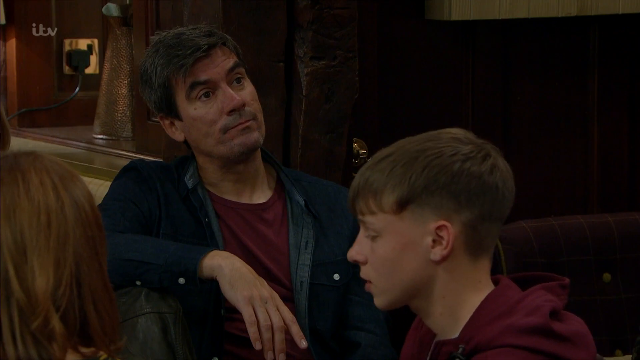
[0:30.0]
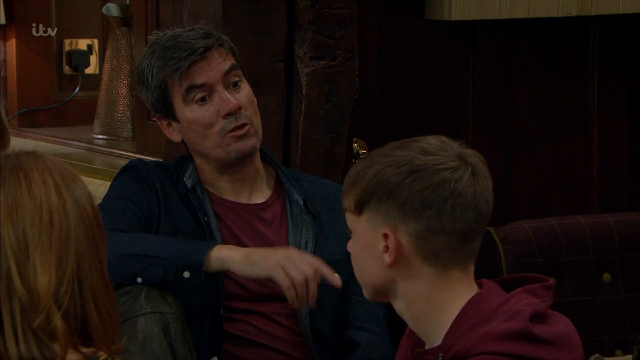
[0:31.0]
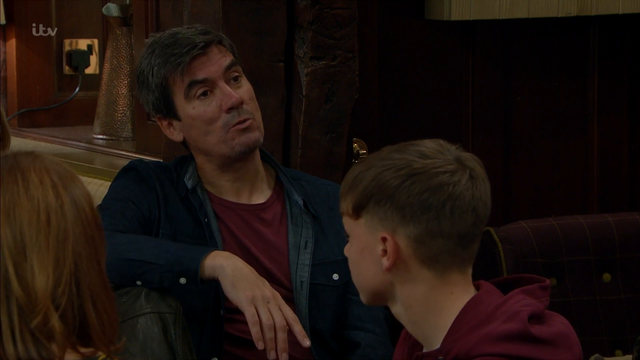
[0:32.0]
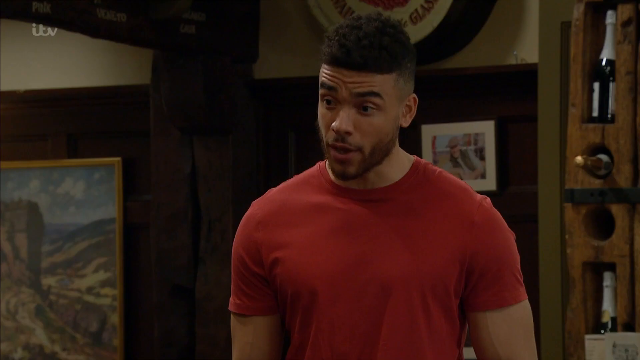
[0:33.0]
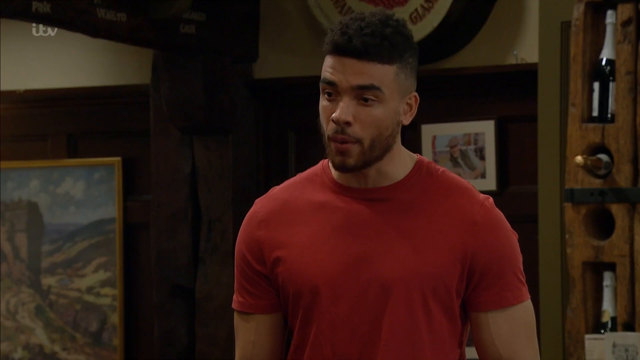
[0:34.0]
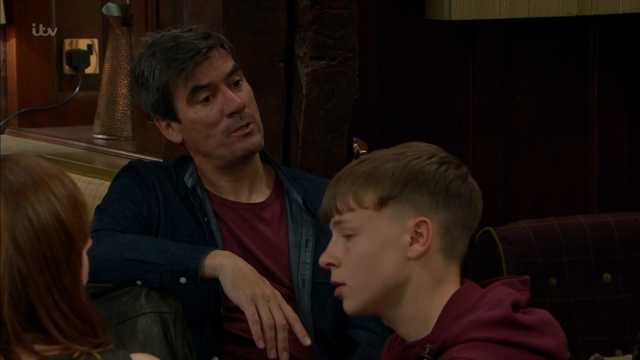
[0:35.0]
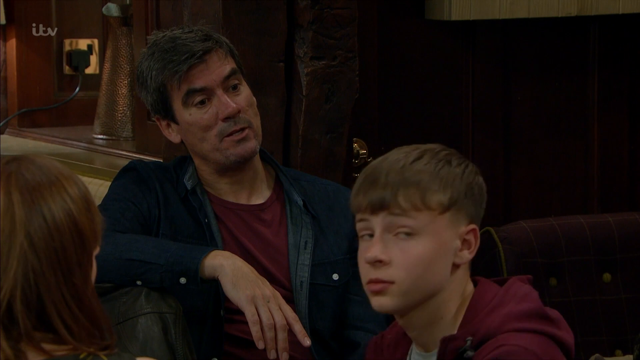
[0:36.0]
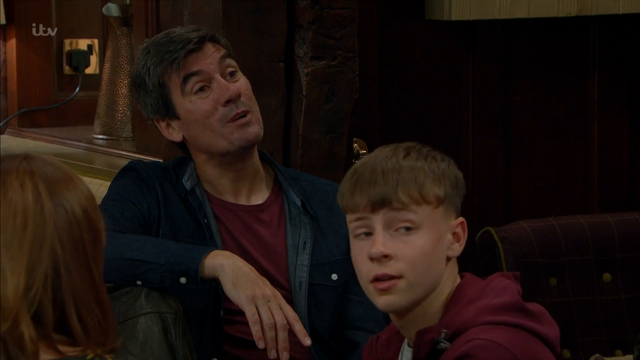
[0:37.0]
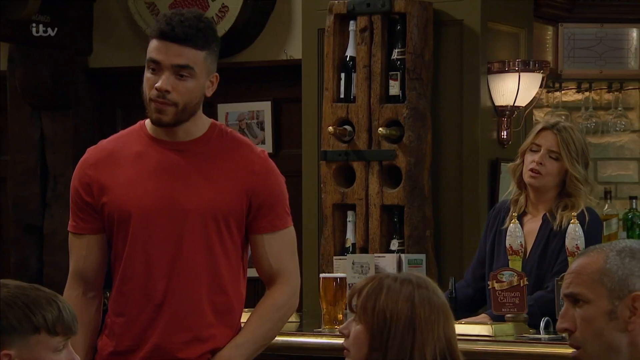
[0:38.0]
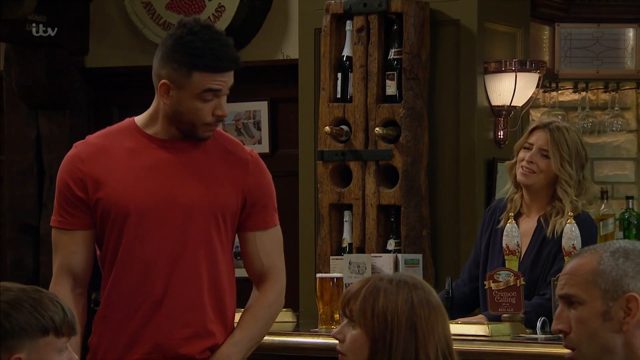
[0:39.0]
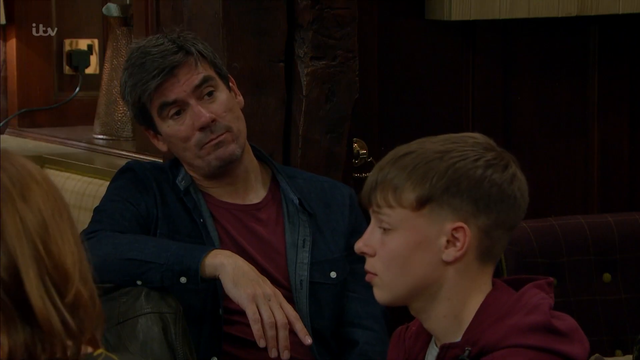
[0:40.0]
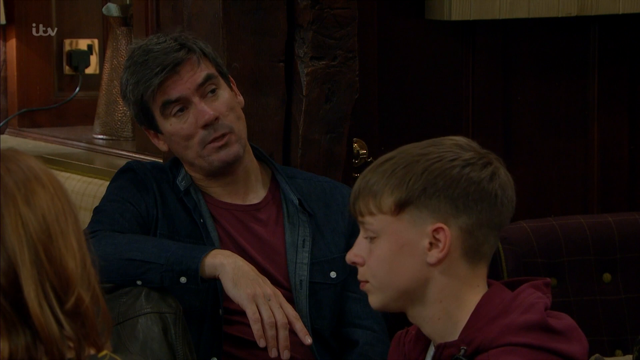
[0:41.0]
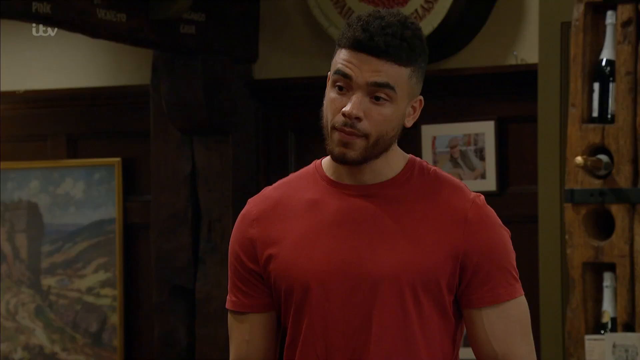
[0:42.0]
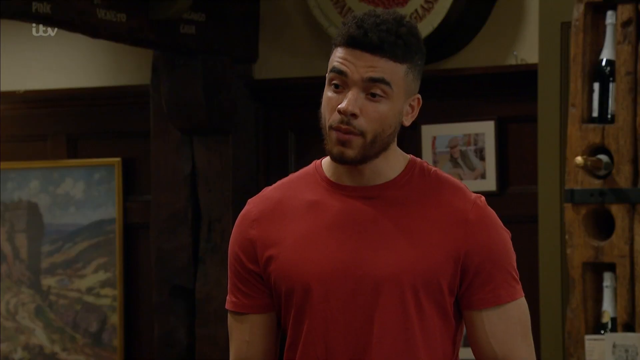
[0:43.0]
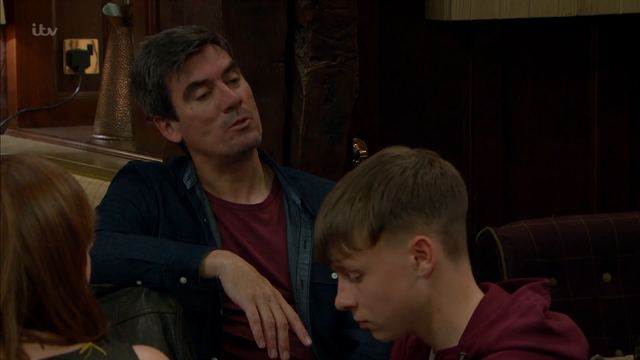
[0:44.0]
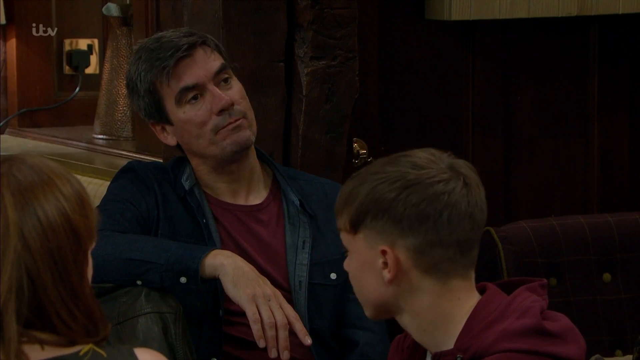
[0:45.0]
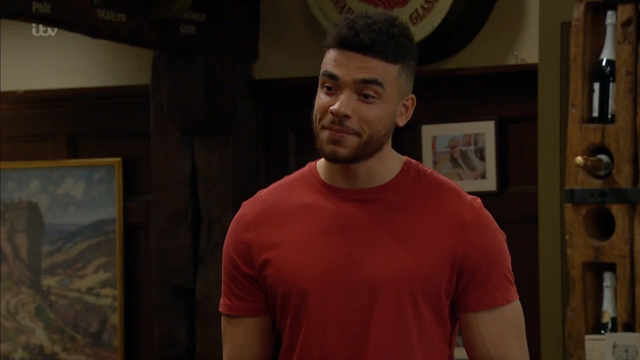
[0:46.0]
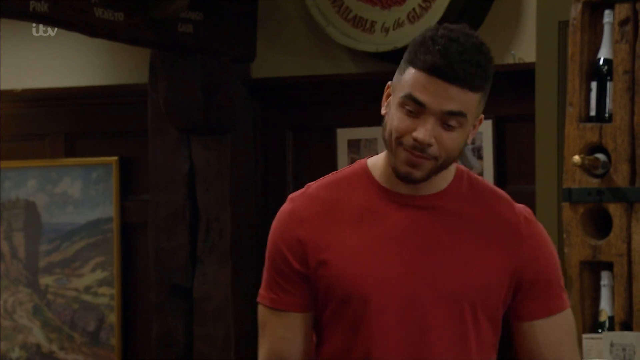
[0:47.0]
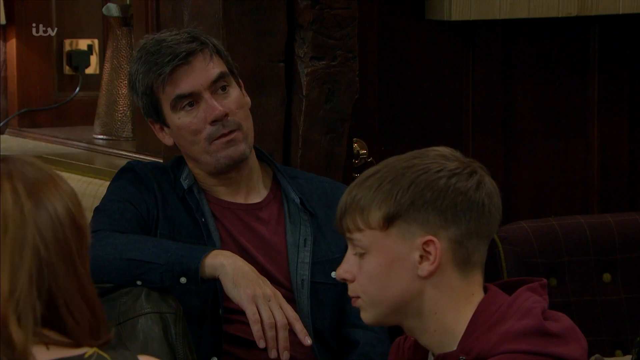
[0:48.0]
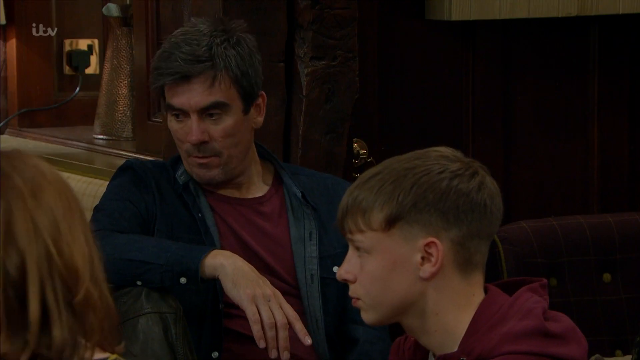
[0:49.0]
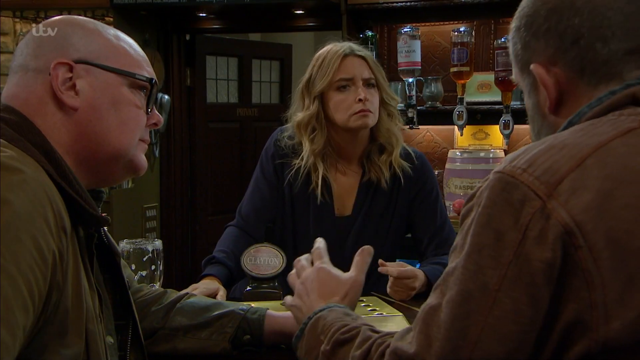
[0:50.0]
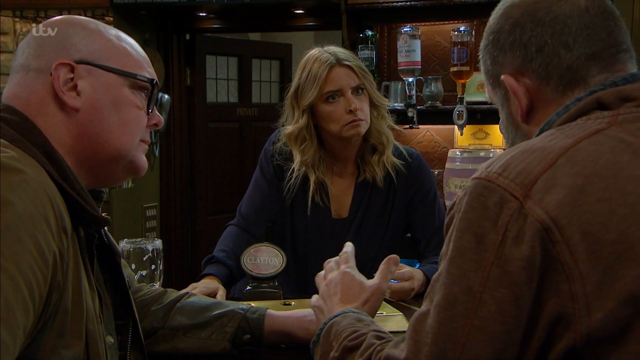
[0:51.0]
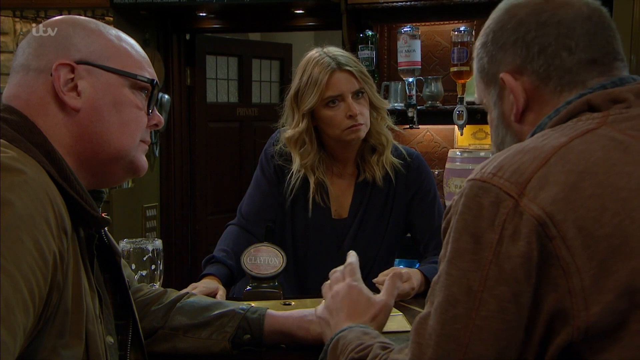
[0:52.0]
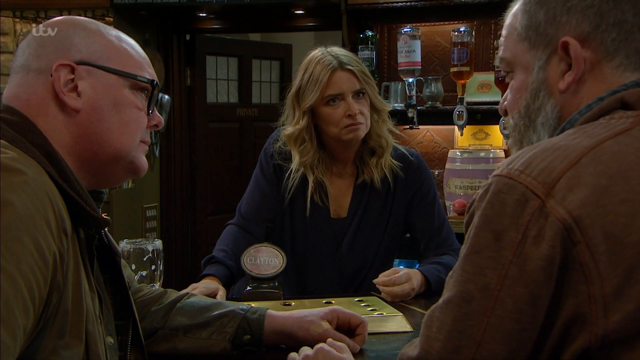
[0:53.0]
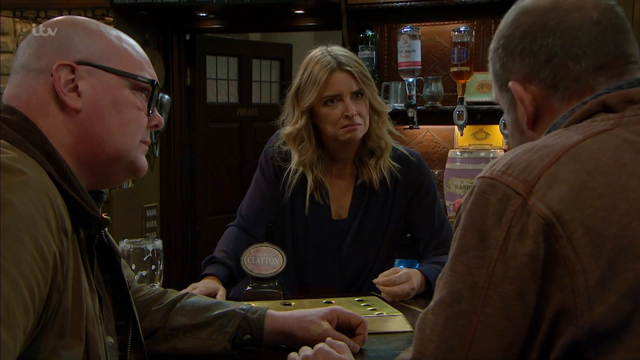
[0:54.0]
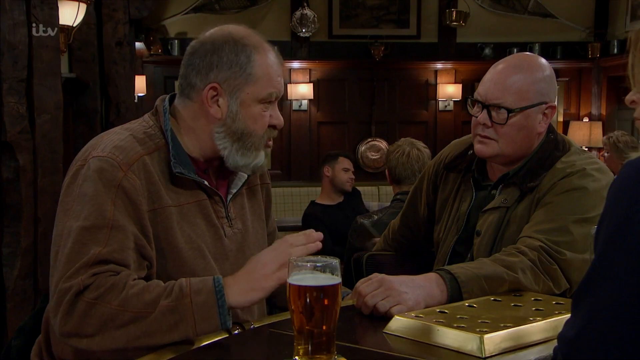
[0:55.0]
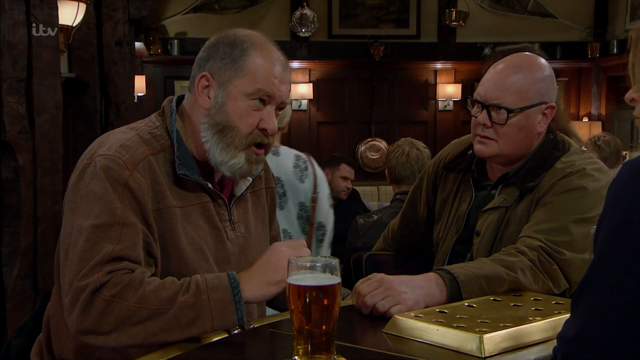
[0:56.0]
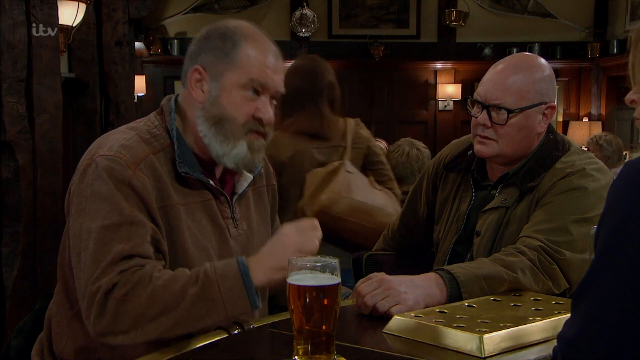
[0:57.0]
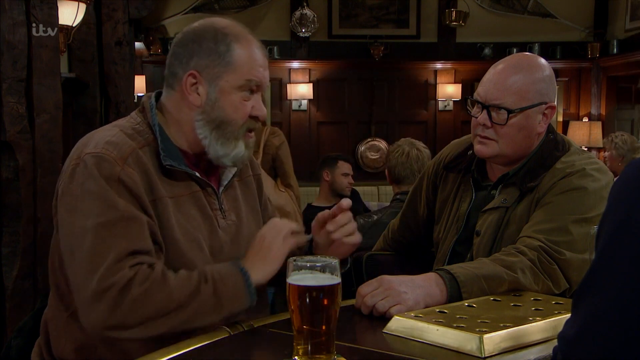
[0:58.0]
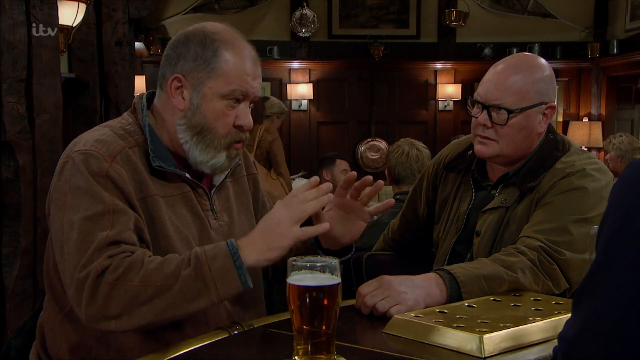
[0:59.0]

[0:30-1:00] The man in the blue button-down shirt and red undershirt lays his right forearm against the chair next to him. He raises his palm in the air and points his index finger out as he speaks, his head tilted up. A man in a red t-shirt with short hair looks down as he responds to the question, and the man in the blue shirt and red undershirt tilts his head up to answer. The camera changes to show a woman in a blue shirt behind the bar responding to what the man in the blue button-down shirt said. The camera changes back to the man, still leaning against the chair with his right forearm. He lifts his head to talk to the man in the red t-shirt, who raises his eyebrows, wrinkles showing in his forehead as he answers a question. With a slight smirk on his face, the man in the red t-shirt turns back toward the bar. The seated man in the blue button-down shirt turns his head toward his right shoulder and looks down. The camera shows a close-up of two customers sitting at the bar. The man on the left side of the screen has a bald head and black-framed glasses. The man on the right side wears a light brown leather jacket and raises his left hand off the bar as he speaks to the bartender in front of him, who has a blue shirt and long blonde hair. She gives a slight frown as he finishes talking. The scene then shows the man in the brown leather jacket from the front. He has a large gray beard and moves his right hand up and down as he exclaims and makes a point, then raises both hands in the air with his palms displayed outward.